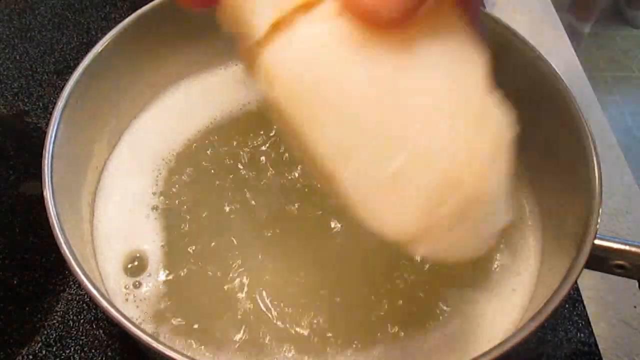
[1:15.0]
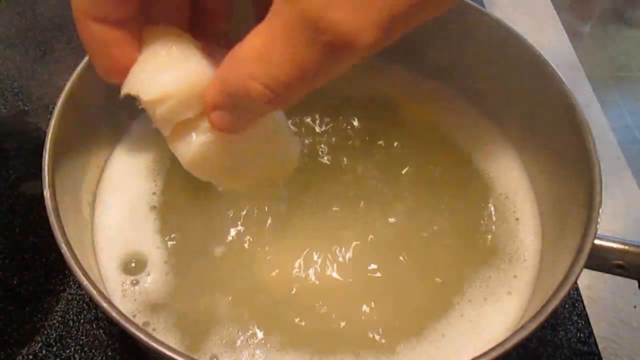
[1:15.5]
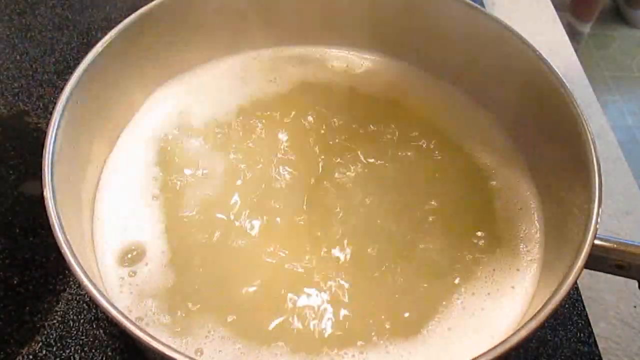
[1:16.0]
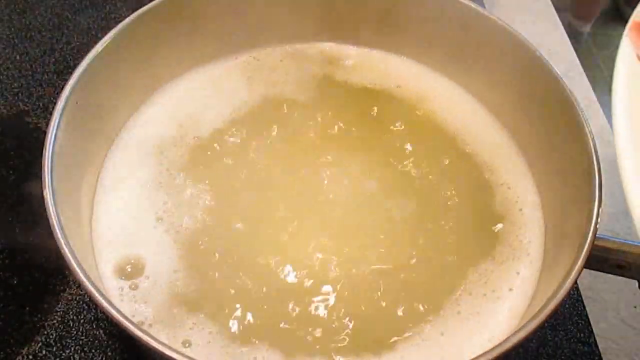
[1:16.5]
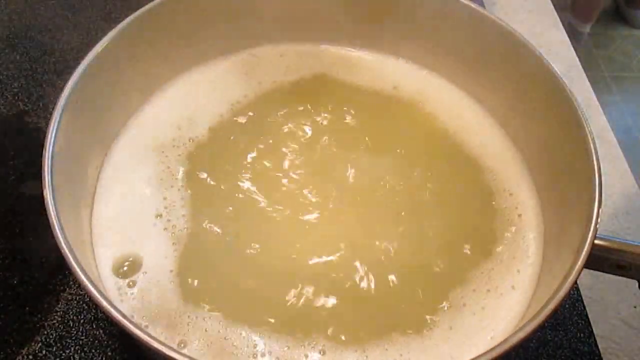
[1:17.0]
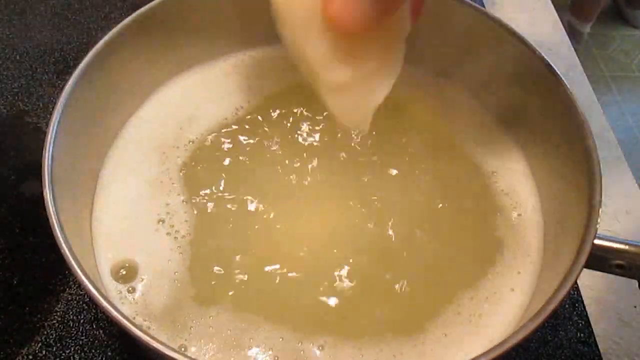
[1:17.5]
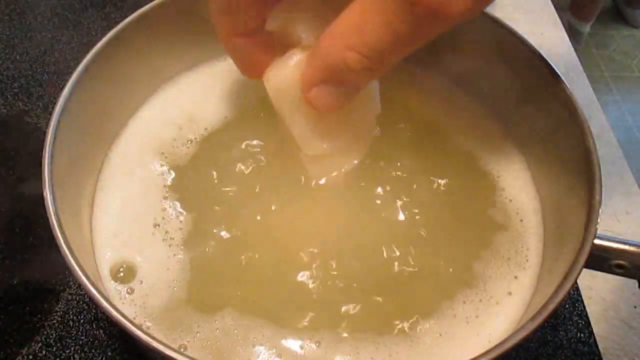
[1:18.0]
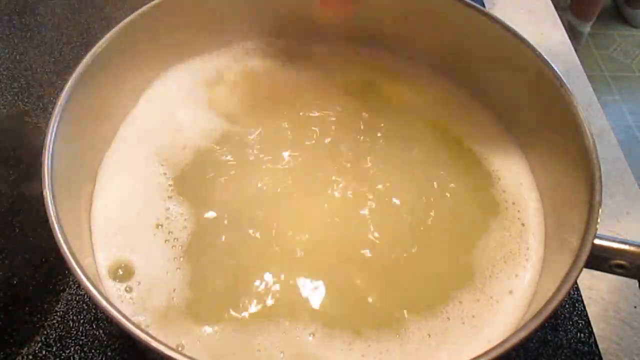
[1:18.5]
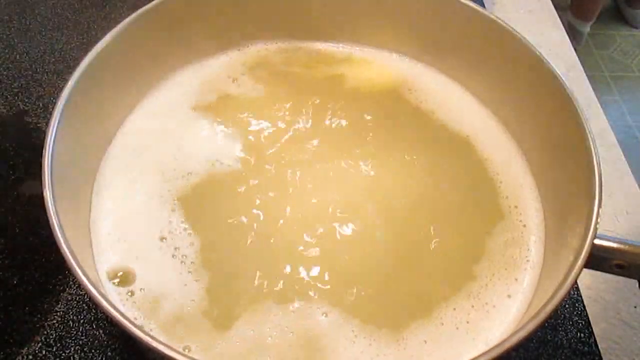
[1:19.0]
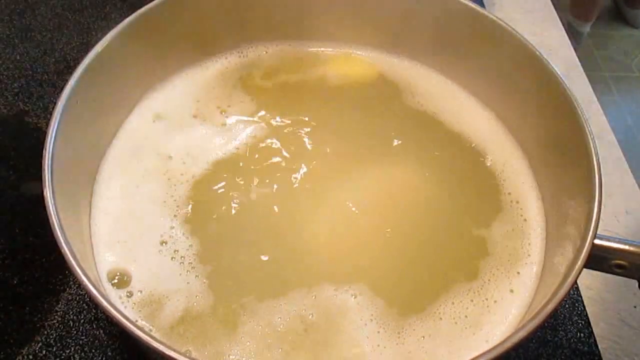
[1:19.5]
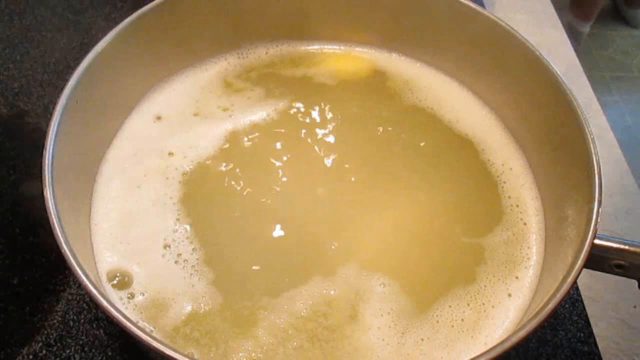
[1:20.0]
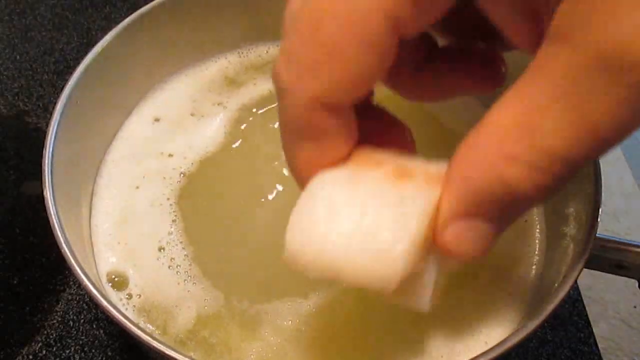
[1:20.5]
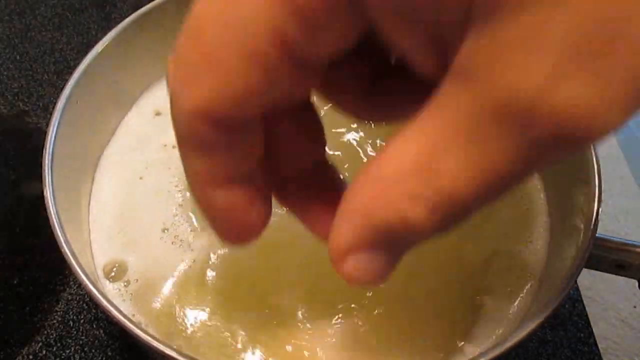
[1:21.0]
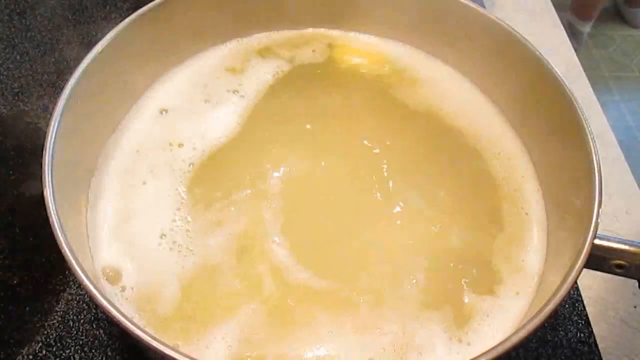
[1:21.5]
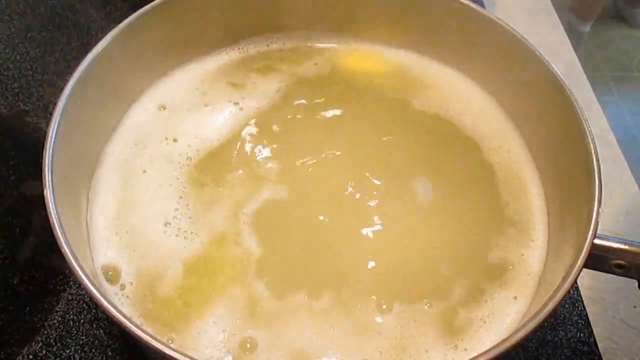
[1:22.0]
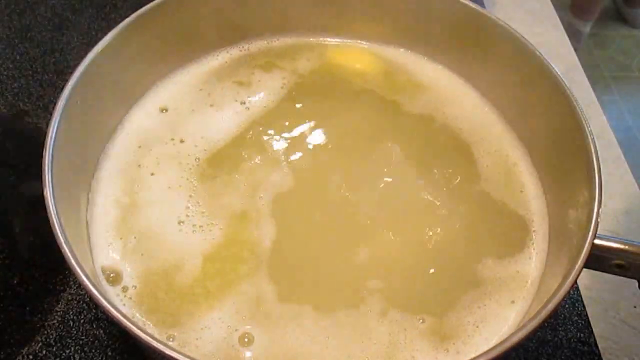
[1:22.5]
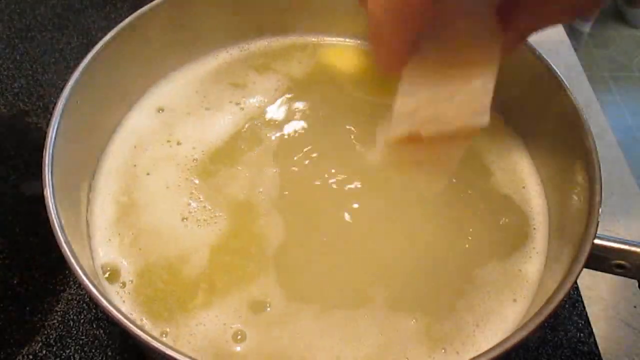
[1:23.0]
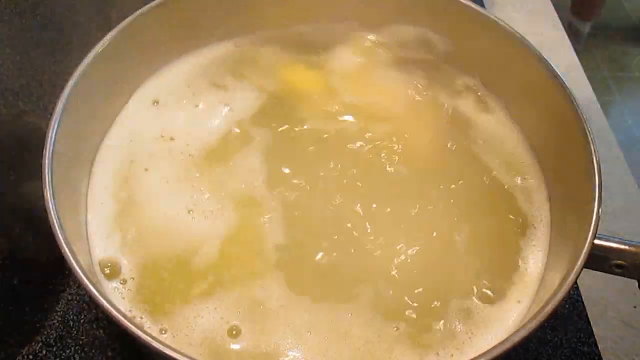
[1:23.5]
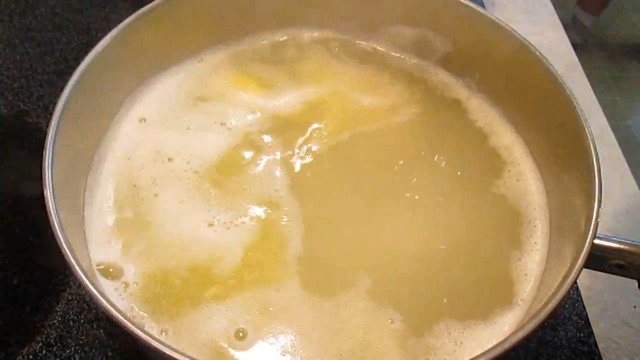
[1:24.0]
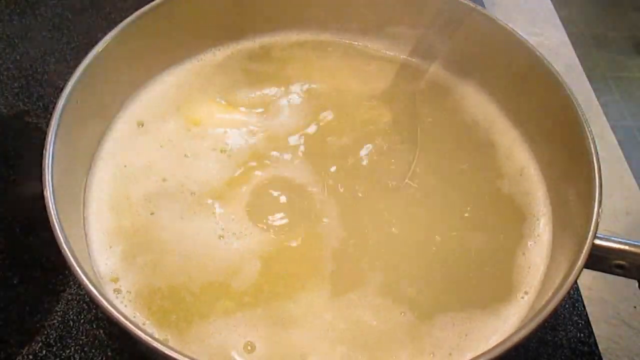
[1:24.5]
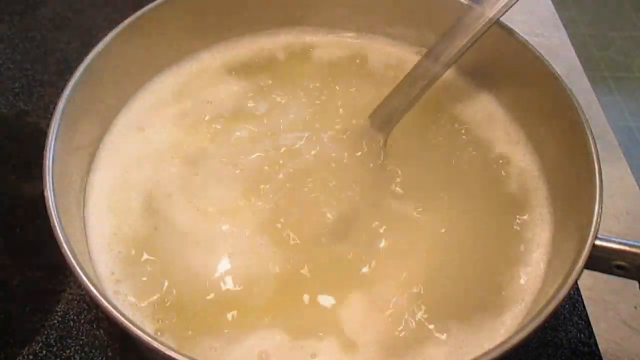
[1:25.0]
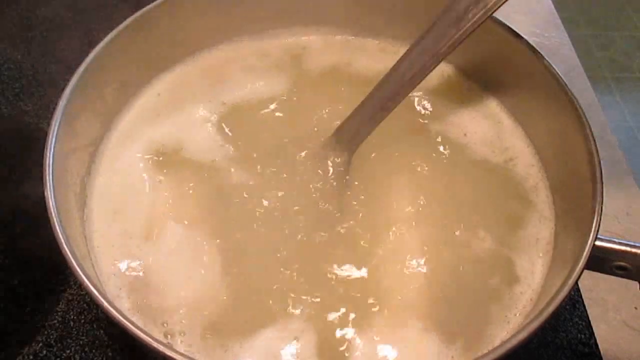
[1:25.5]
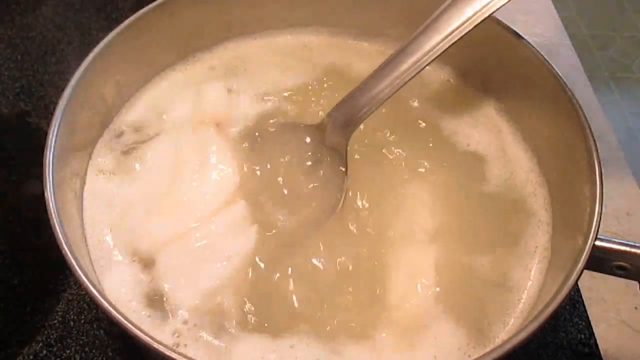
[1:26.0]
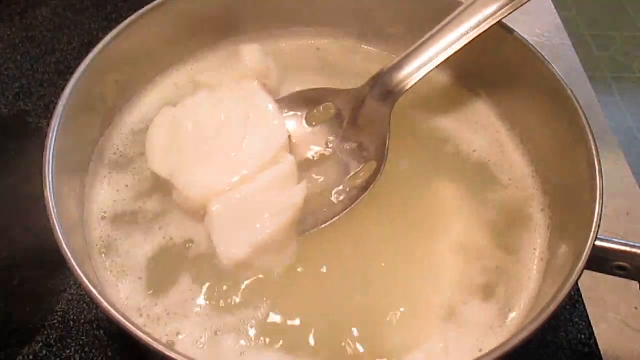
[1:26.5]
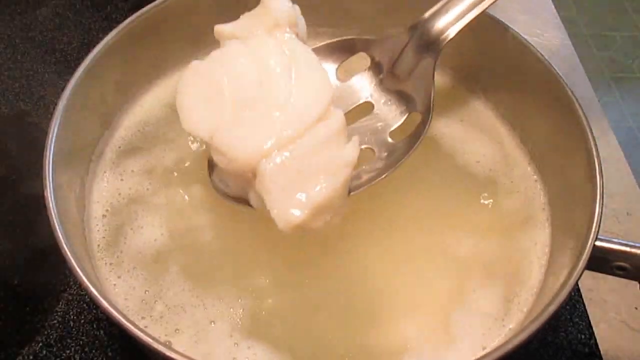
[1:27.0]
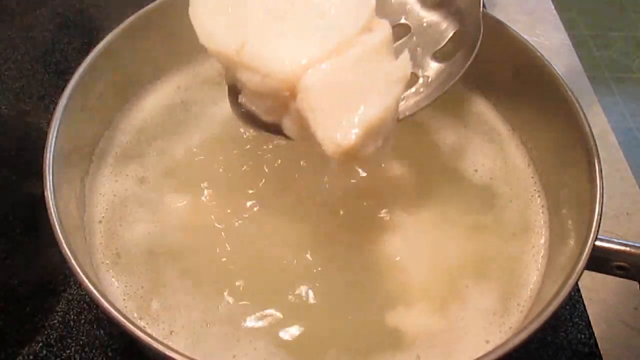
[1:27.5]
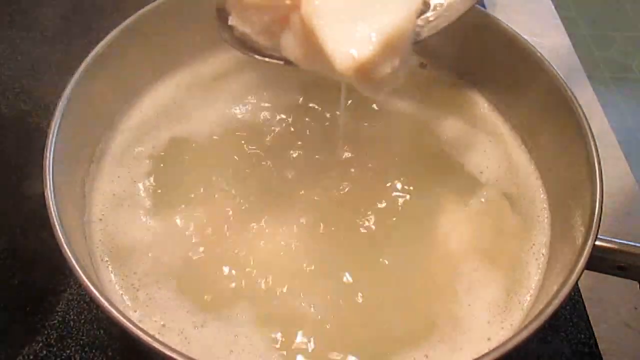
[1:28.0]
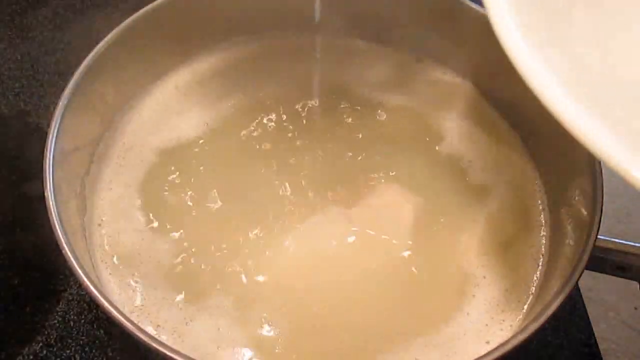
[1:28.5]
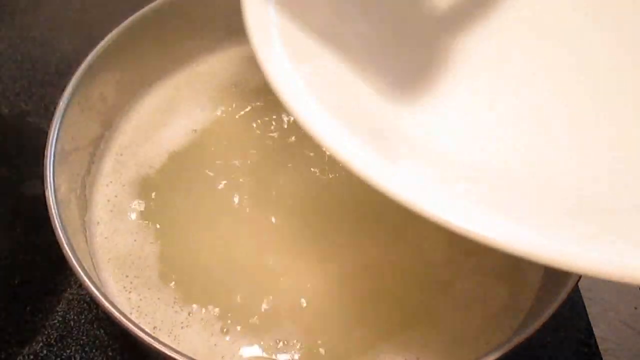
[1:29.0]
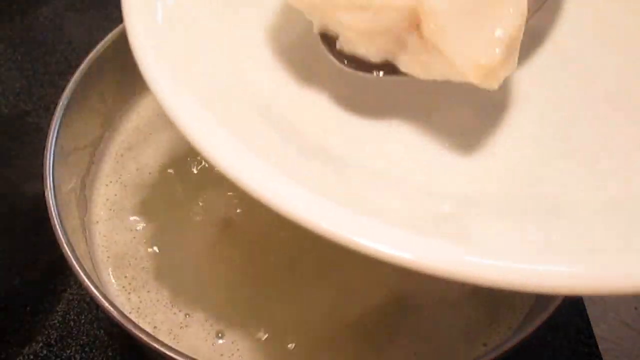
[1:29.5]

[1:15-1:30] What is likely the third piece of fish is carefully placed into the water. The hand leaves the scene and returns with a fourth piece, placing it carefully by bringing the hand very close to the water before letting go. The next piece is picked up off the plate and placed closer to the bottom of the screen, as the pieces are placed in different spots in the pot rather than in one place, mostly around the perimeter so they are not crowded. Another piece is taken from the plate and put in. Once about eight pieces, the larger pieces from the white side, are all in the pot and have cooked, the hand reappears with a slotted stainless steel spoon, lifts a piece of fish from the boiling water, and lets the liquid drain. The white plate is brought right over the pot, and the fish is placed on it.